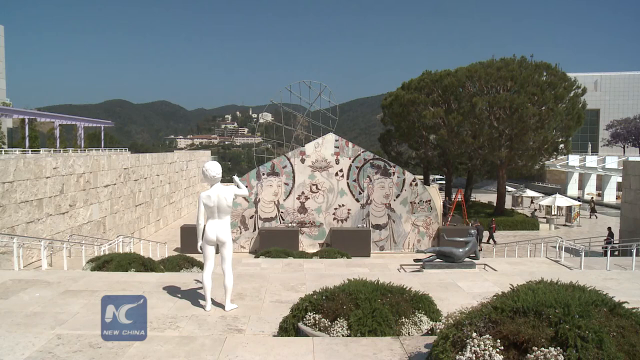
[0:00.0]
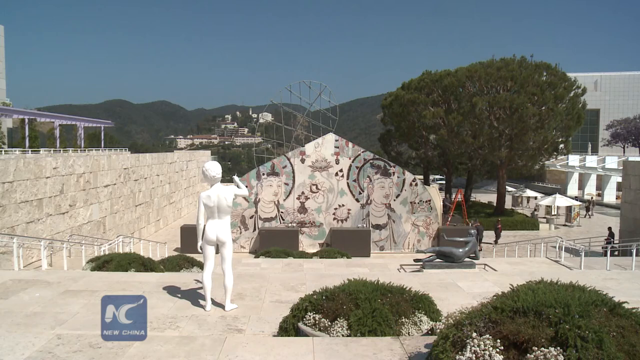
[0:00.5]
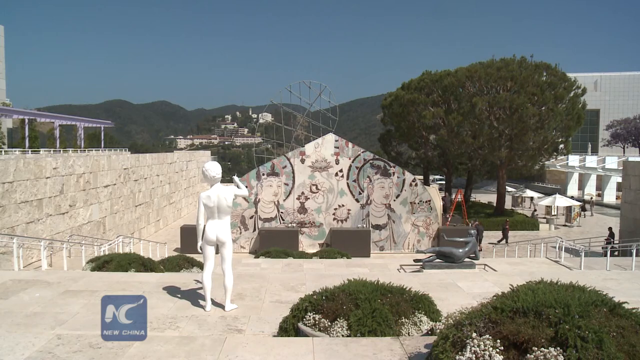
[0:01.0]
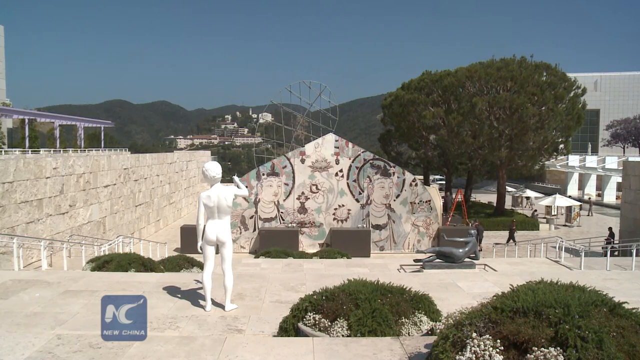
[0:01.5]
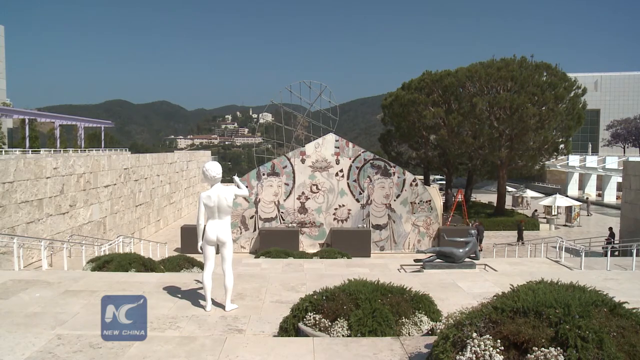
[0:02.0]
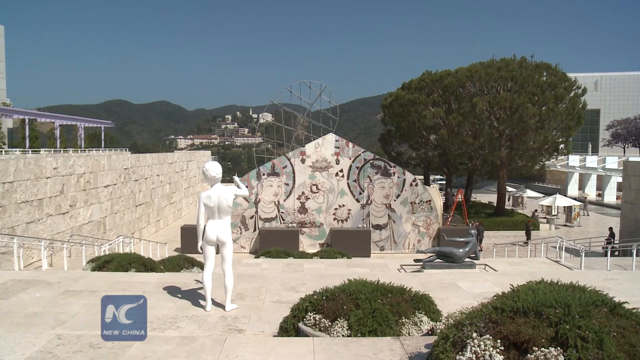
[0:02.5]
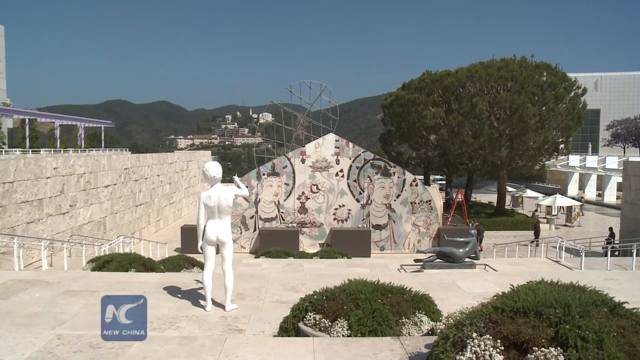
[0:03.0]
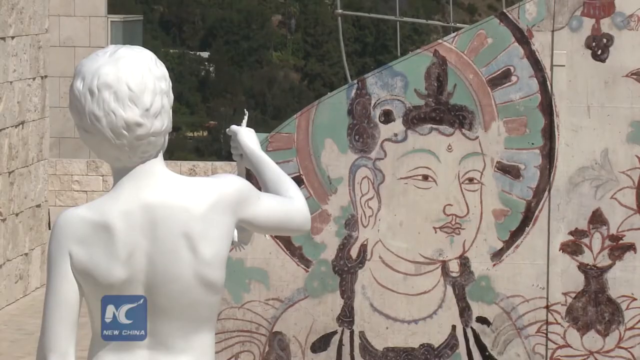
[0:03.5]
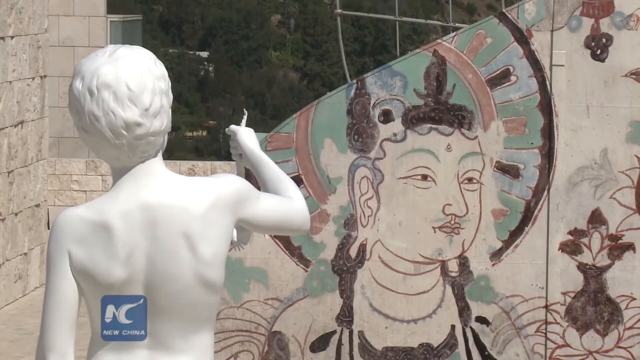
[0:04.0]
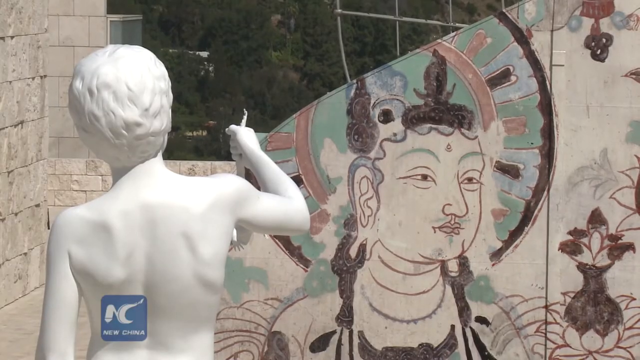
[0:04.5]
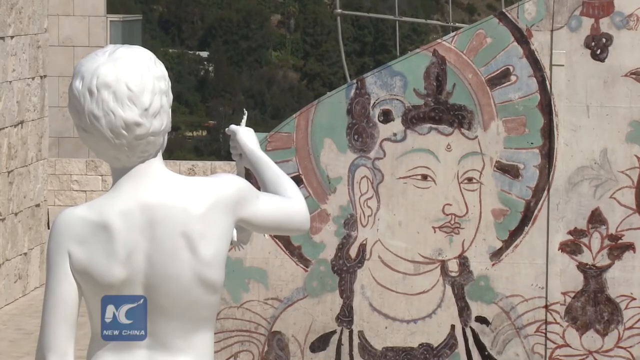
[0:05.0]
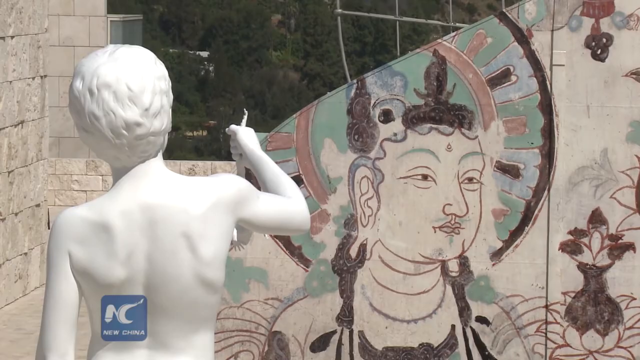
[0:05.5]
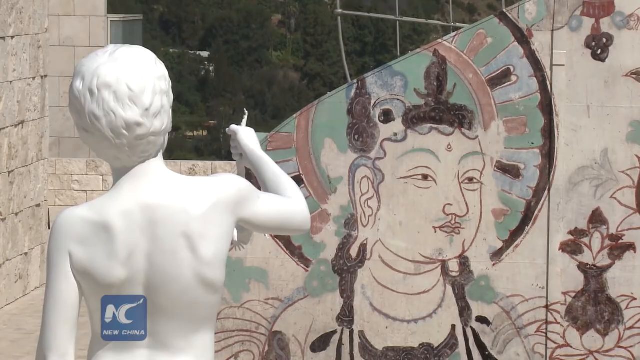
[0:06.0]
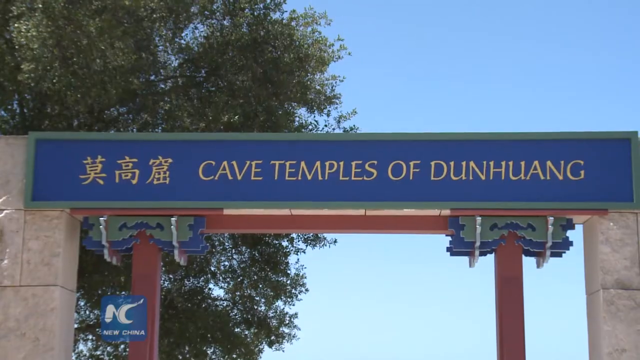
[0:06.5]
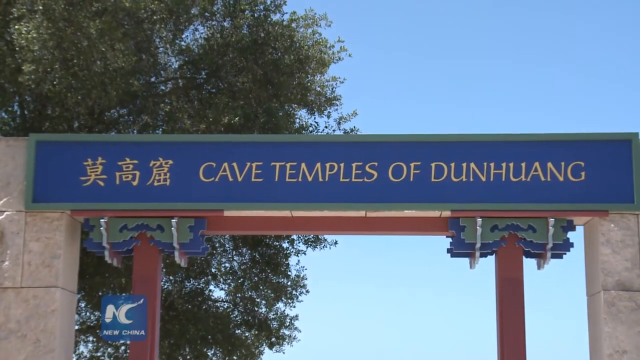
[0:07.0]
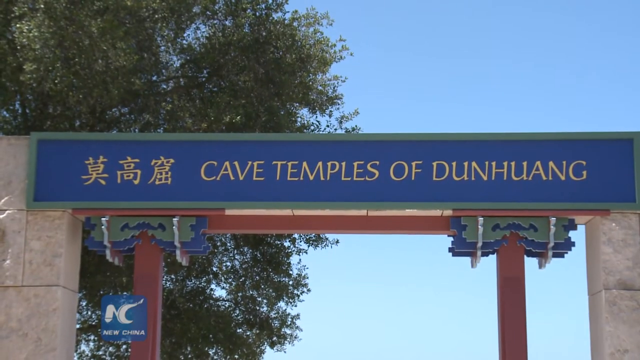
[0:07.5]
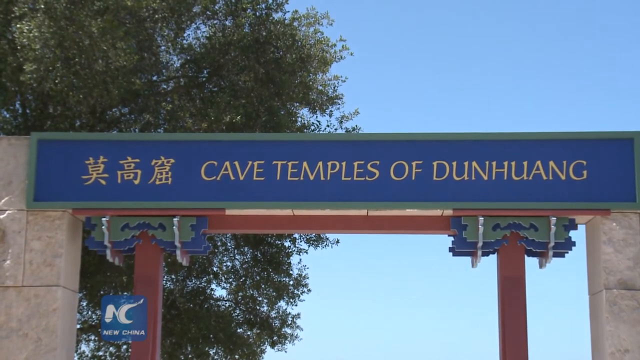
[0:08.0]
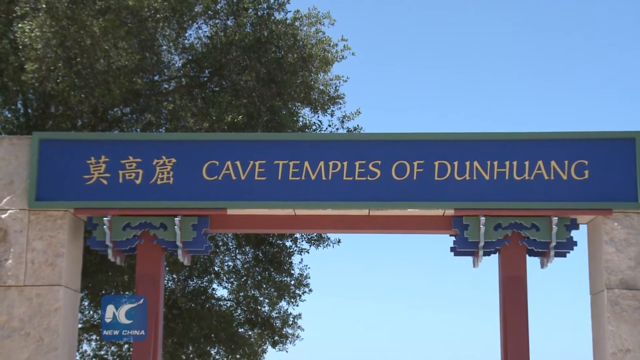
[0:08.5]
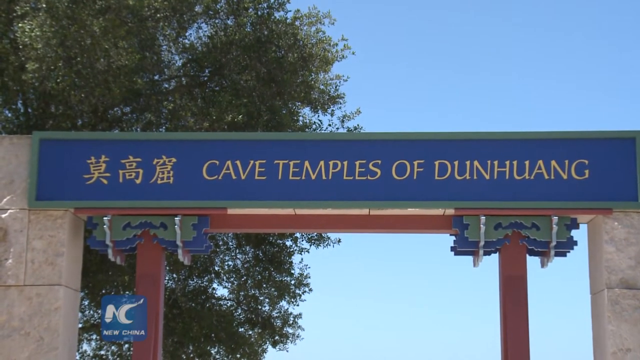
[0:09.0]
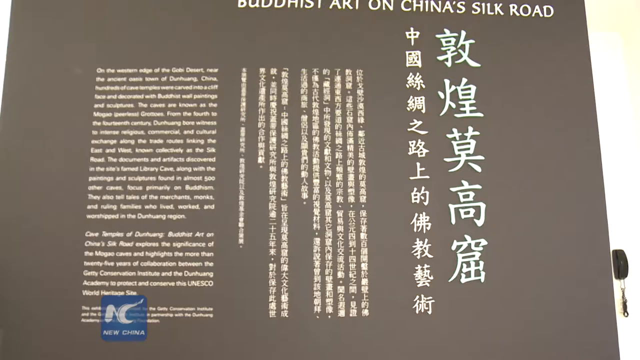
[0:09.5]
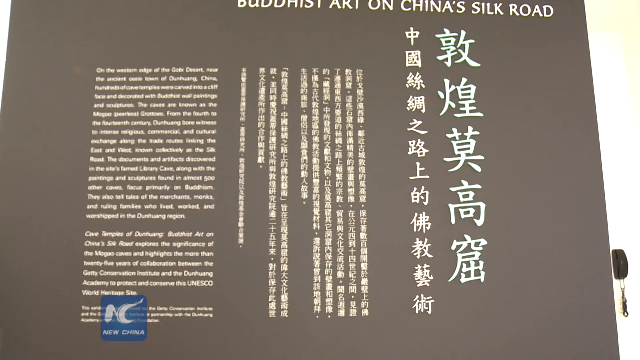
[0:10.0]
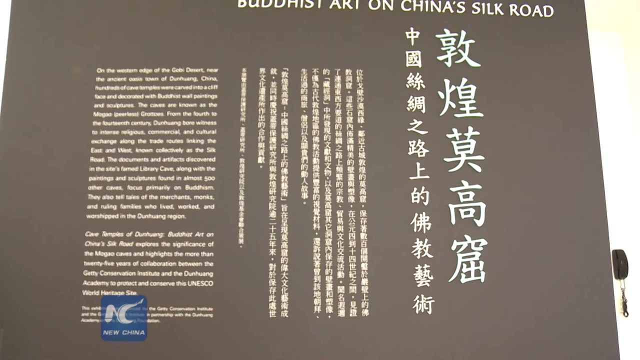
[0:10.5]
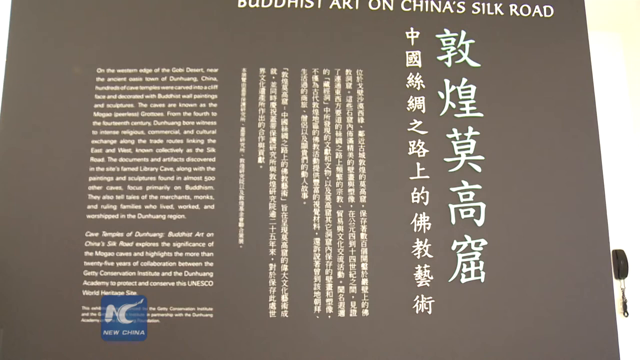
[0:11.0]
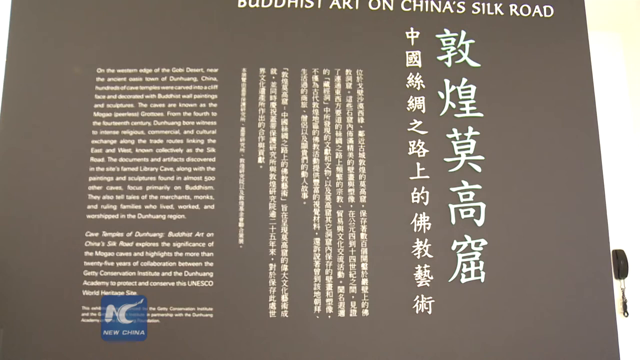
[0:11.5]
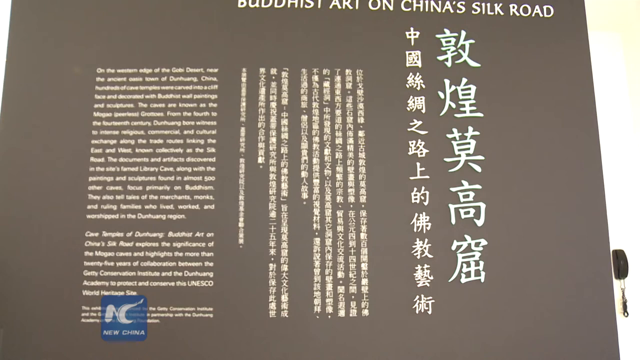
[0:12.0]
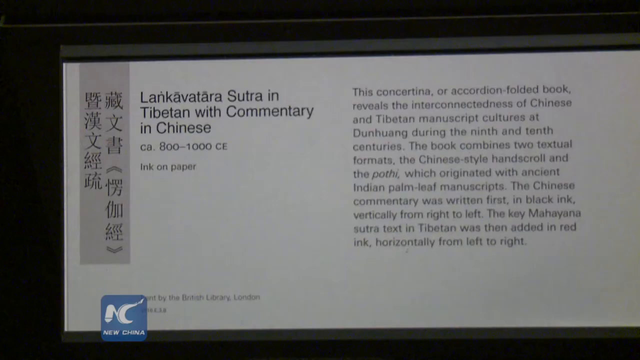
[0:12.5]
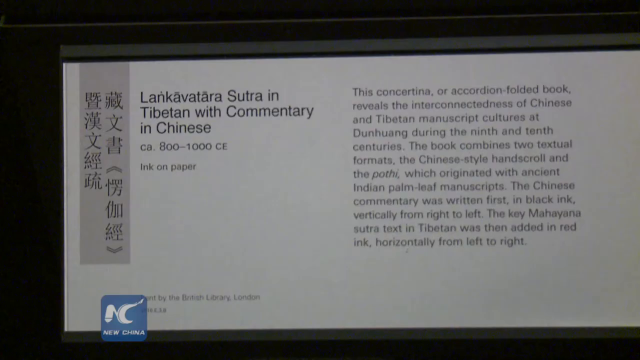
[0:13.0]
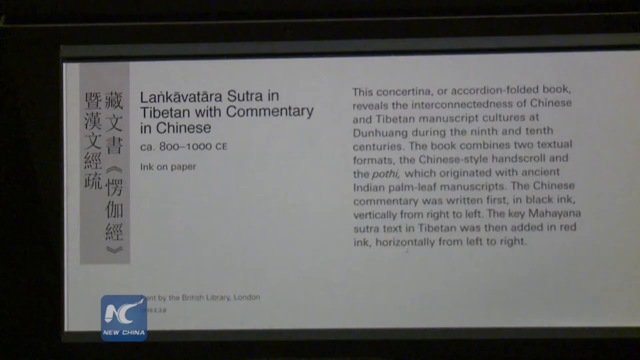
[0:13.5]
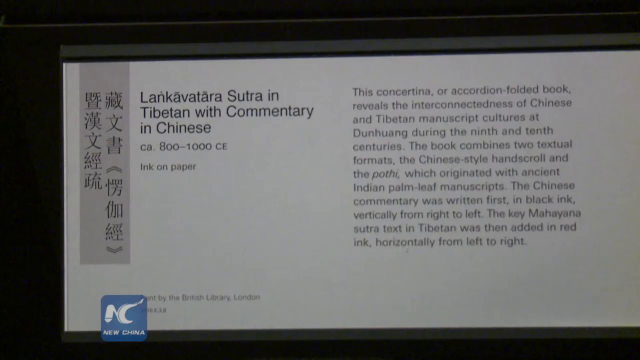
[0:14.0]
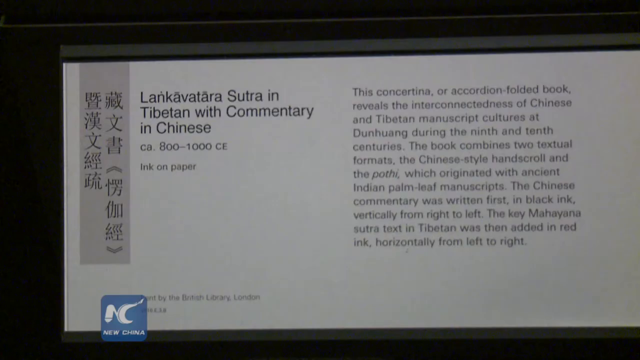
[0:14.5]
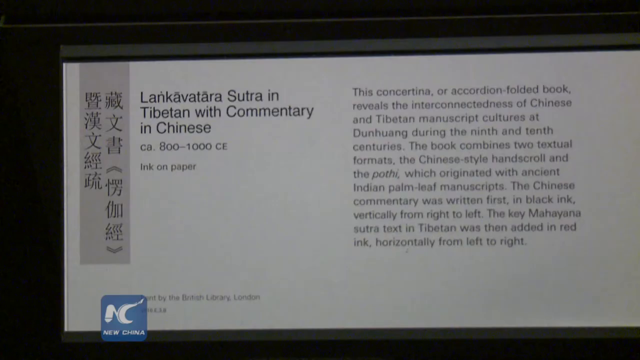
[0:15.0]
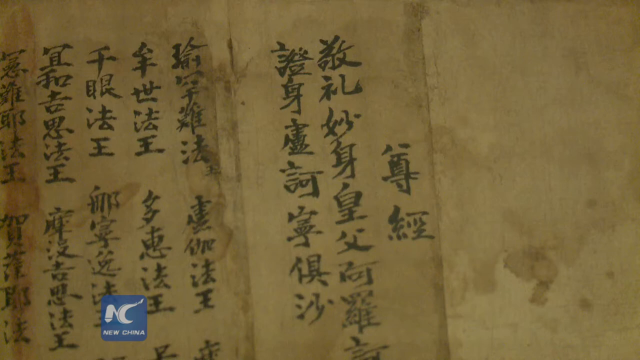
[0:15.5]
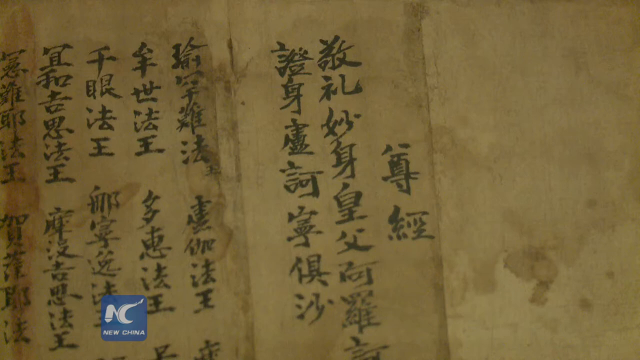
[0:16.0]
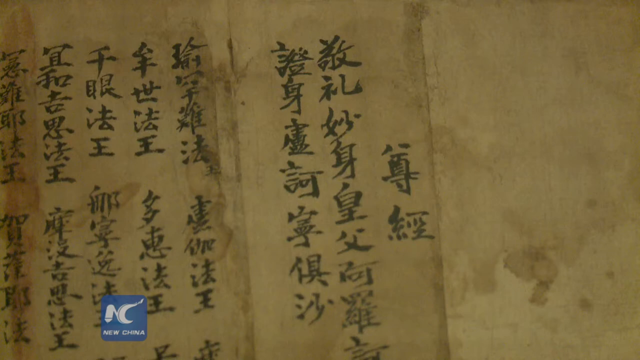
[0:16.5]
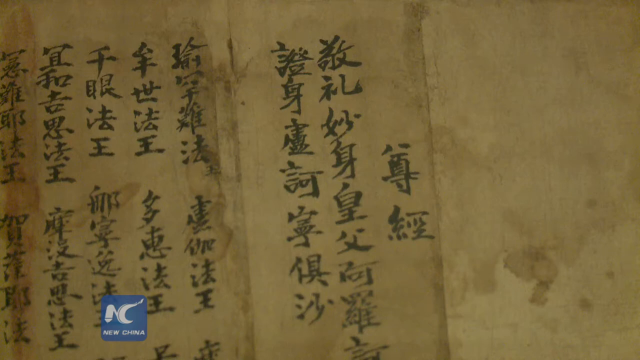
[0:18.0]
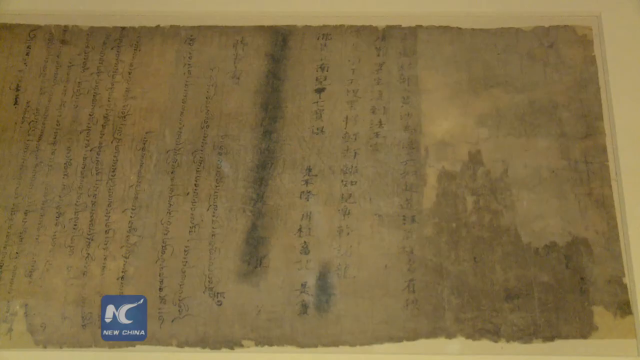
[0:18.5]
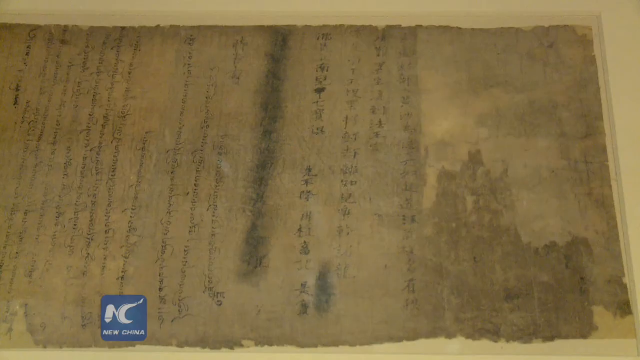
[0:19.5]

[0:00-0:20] The video opens on what looks like a mural in what appears to be a very artistic setting. A very pale white statue looks directly at the camera, and on the right-hand side there is a black statue of someone lying down. The logo of the video or channel is "New China." The words "Cave temples of Dunhuang" appear, and the site looks like a Buddhist temple. Next comes what appears to be a concertina, shown with descriptive text that reads: "The book combines two textual formats, the Chinese-style hand scroll and the pothi, which was originated with ancient Indian palm leaf manuscripts. The Chinese commentary was written first in black ink, vertically from right to left. The key Mahayana sutra text in Tibetan was then added in red ink, horizontally from left to right." The text also describes an accordion-folded book from Dunhuang during the 9th and 10th centuries.